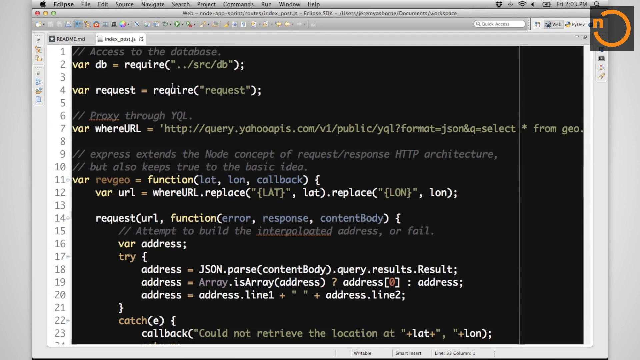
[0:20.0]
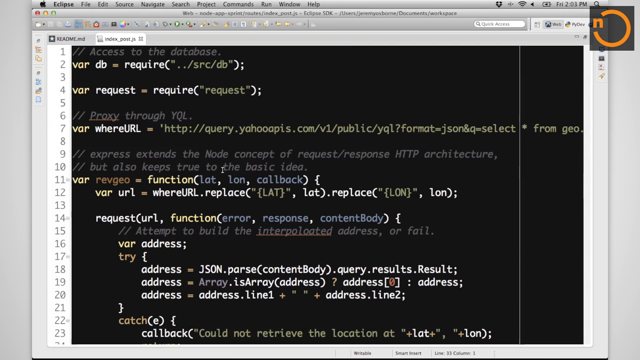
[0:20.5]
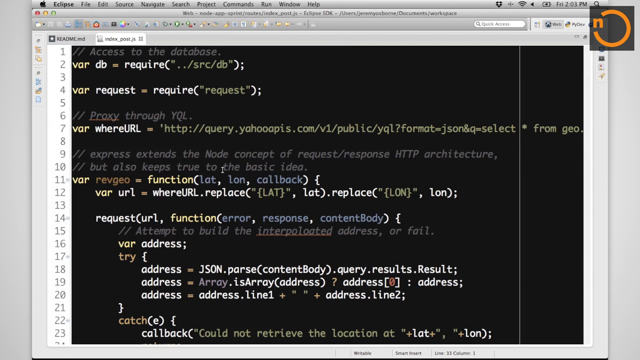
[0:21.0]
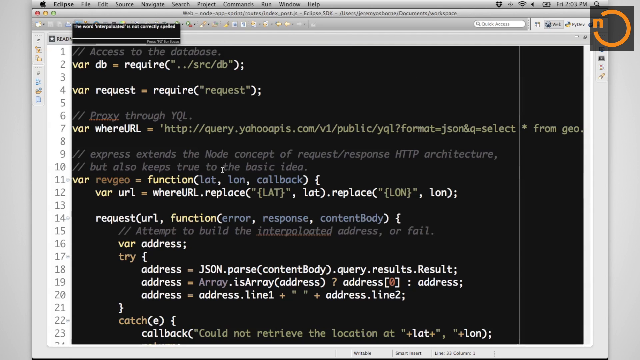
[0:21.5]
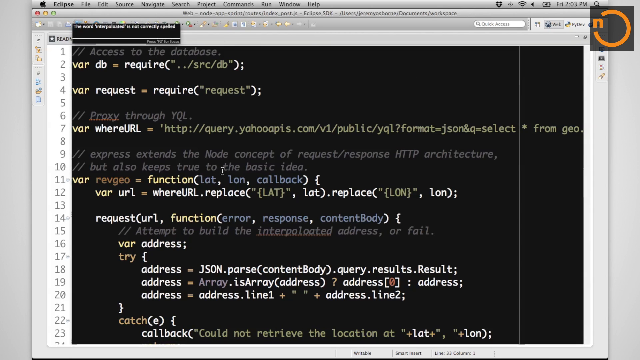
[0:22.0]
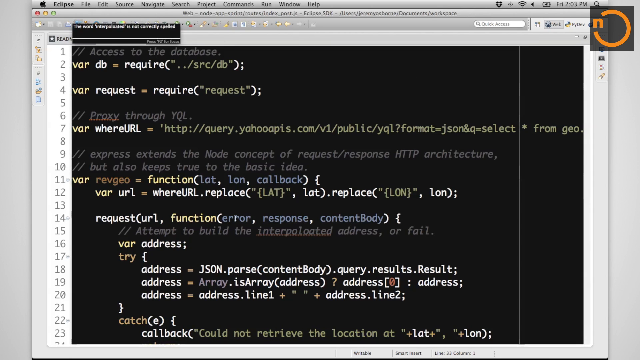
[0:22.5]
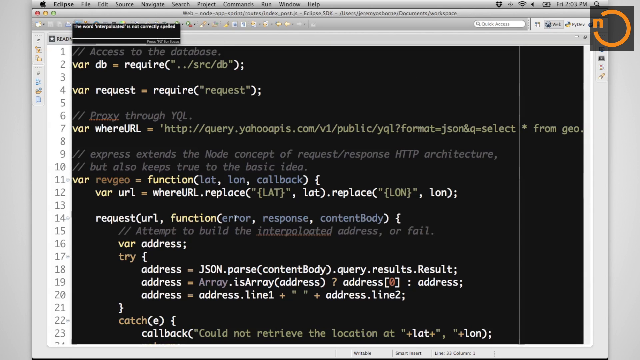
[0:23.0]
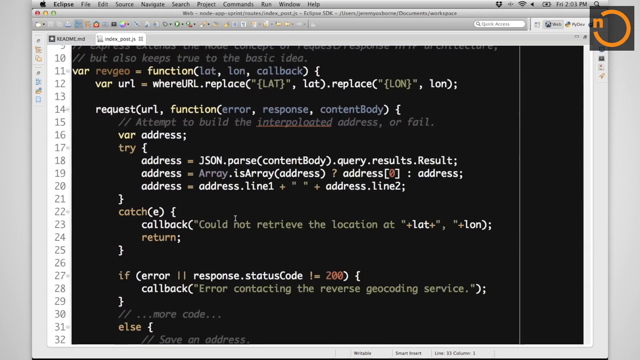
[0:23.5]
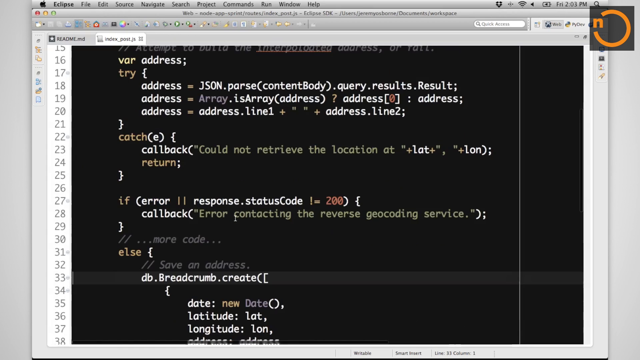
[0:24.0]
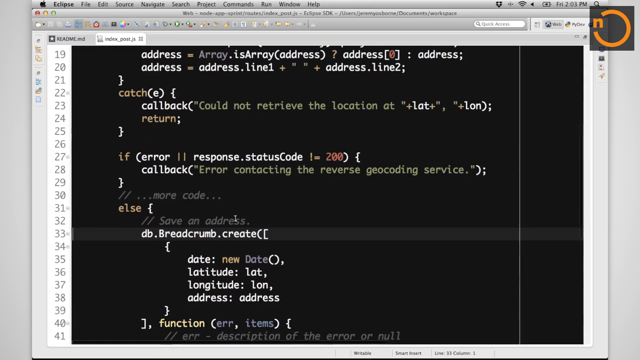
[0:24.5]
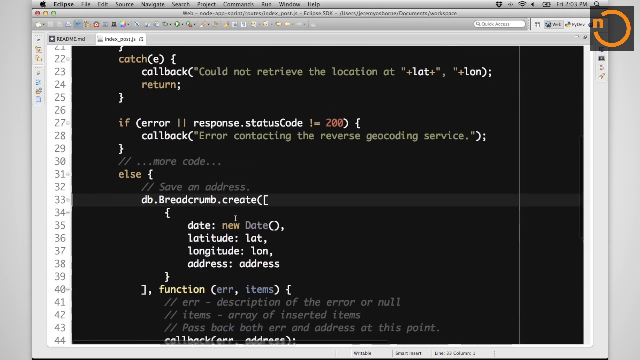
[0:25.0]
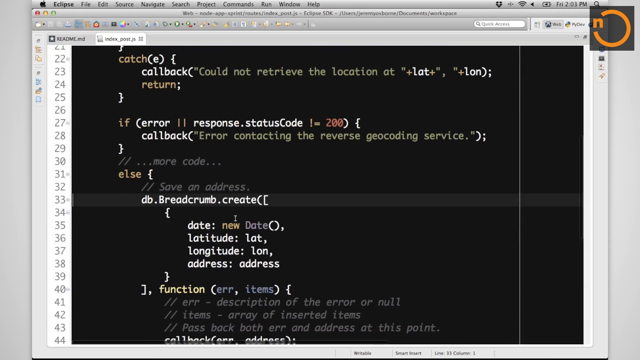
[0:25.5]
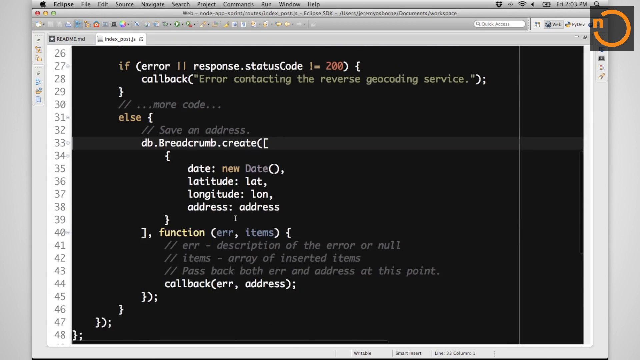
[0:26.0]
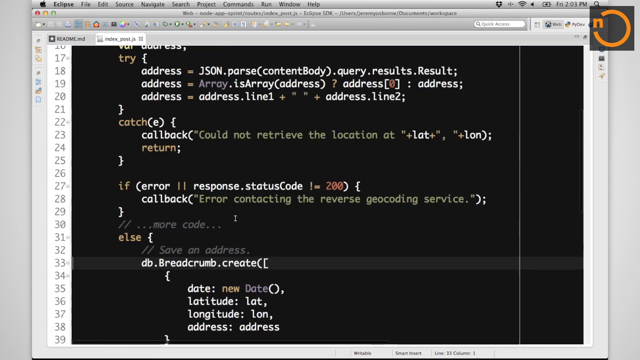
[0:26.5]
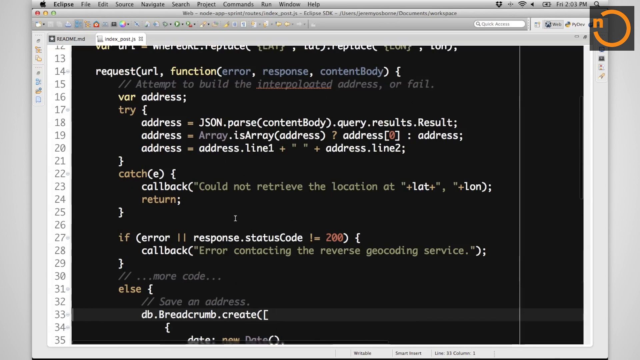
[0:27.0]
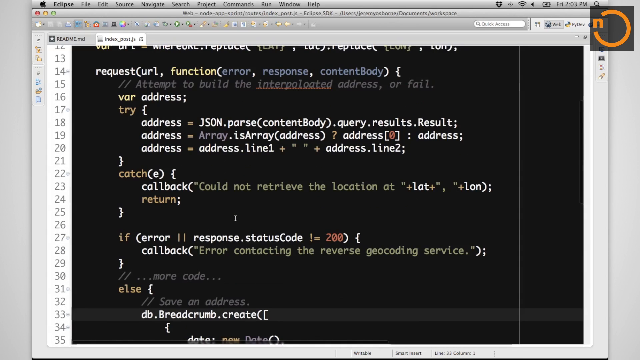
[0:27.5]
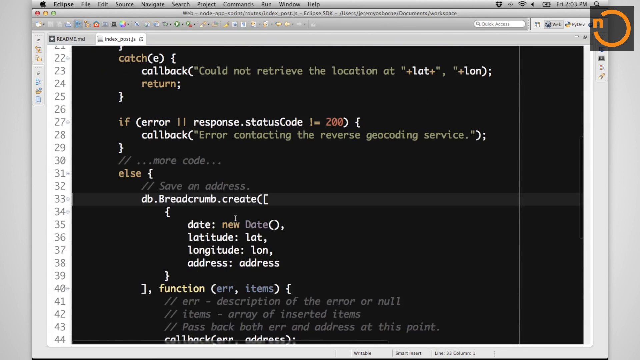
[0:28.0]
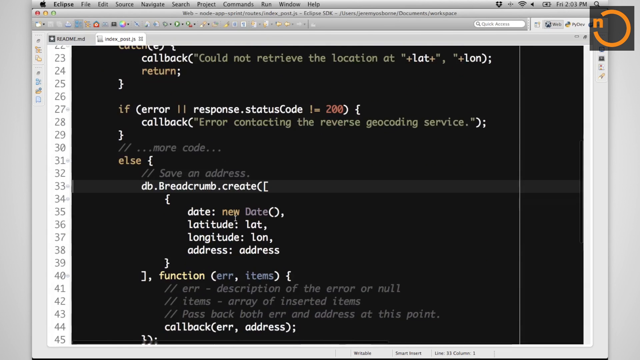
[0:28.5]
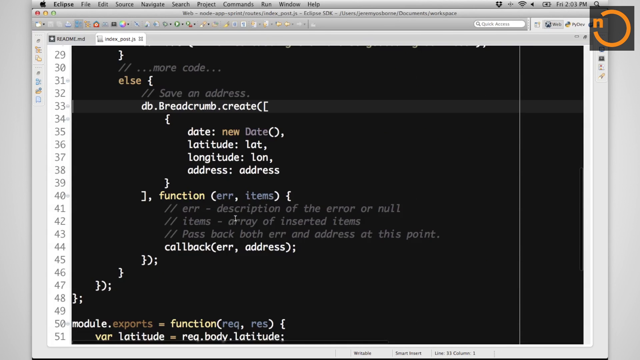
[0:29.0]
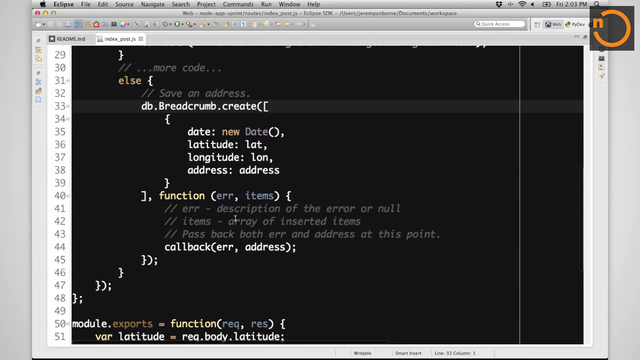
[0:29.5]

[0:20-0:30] The screen scrolls down and the code moves up, showing more functions, with the code almost complete. There are several lines of code, and the code passes line 50. The screen is a Safari browser, and the Apple logo is in the left corner, so it is being done on an Apple computer.